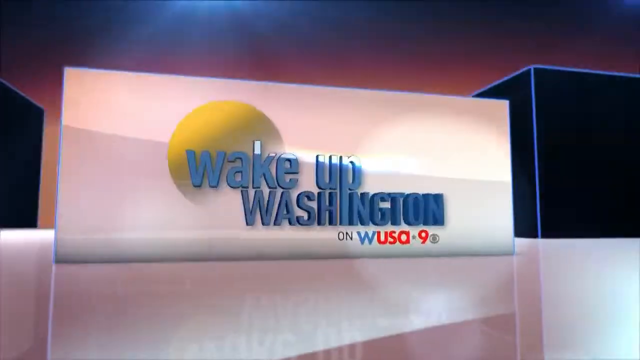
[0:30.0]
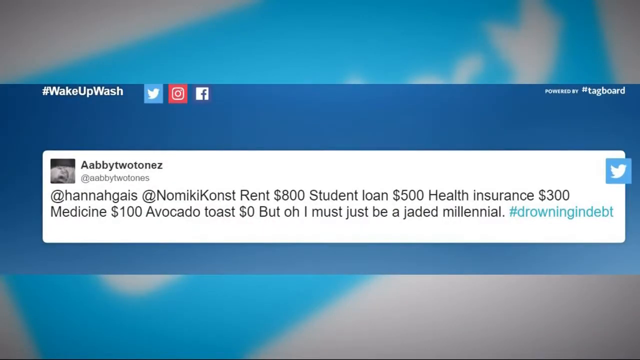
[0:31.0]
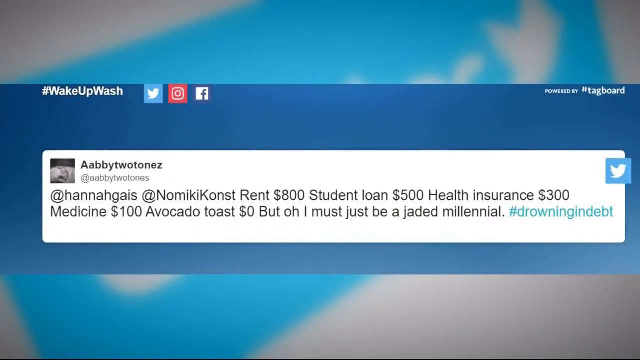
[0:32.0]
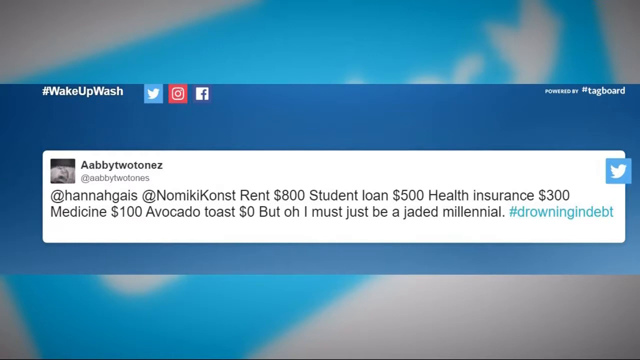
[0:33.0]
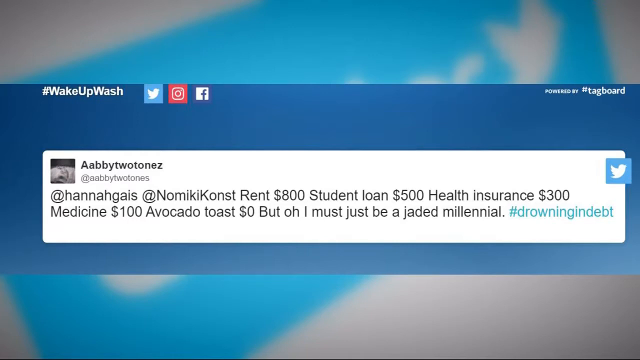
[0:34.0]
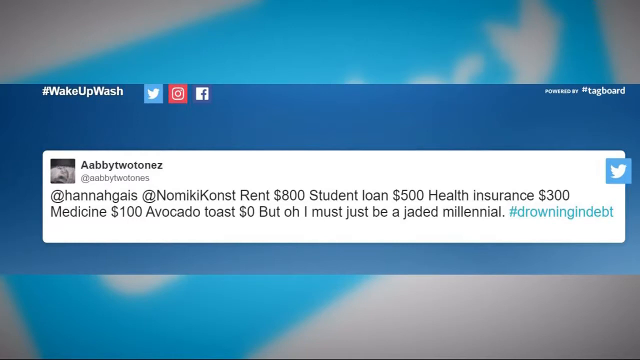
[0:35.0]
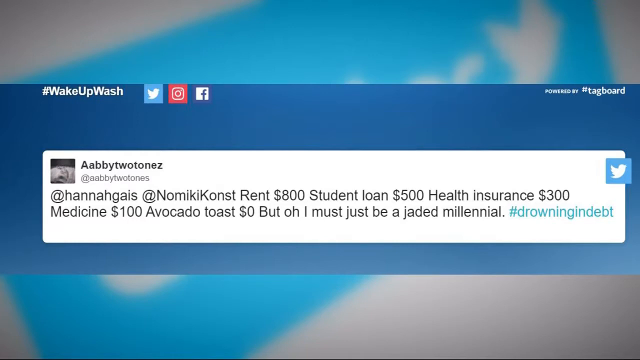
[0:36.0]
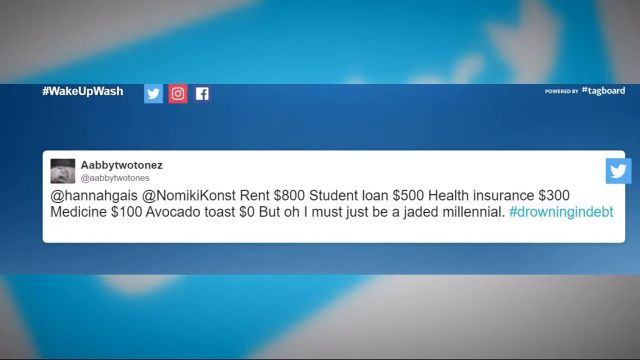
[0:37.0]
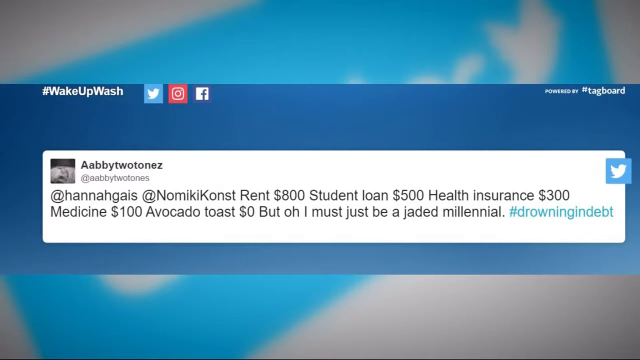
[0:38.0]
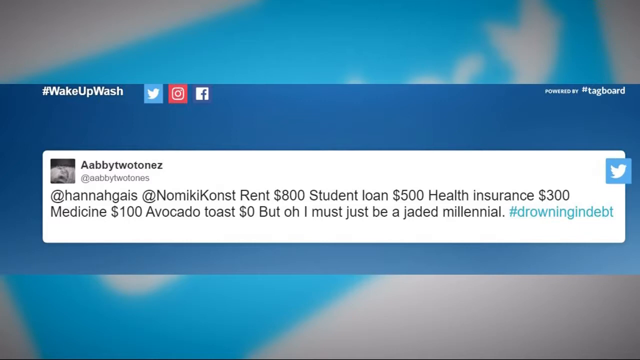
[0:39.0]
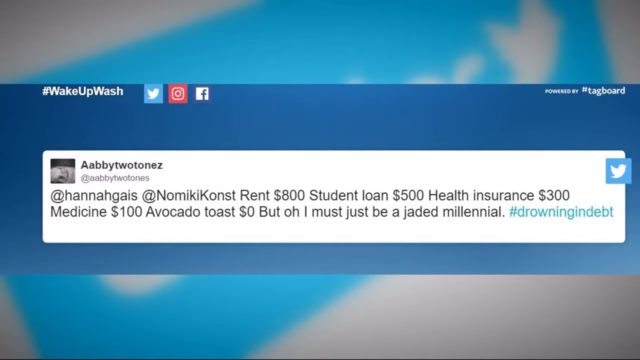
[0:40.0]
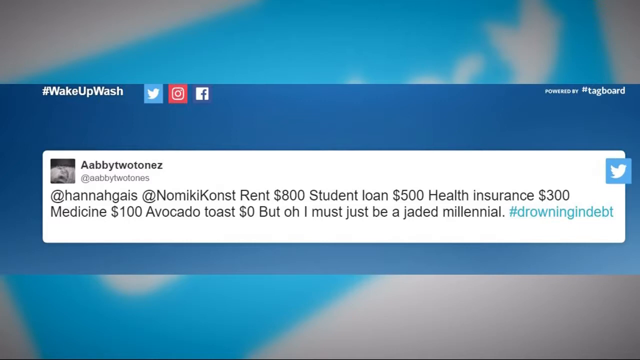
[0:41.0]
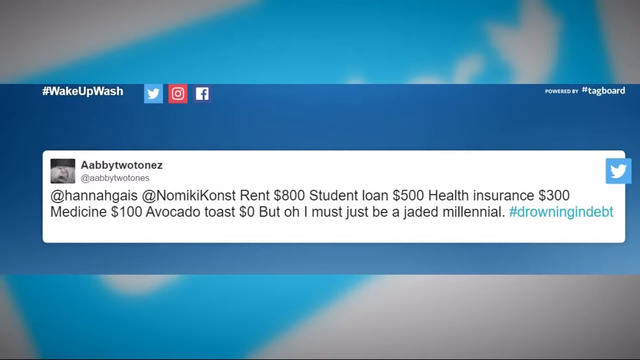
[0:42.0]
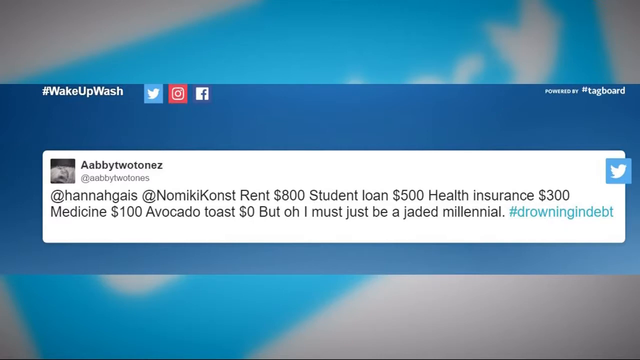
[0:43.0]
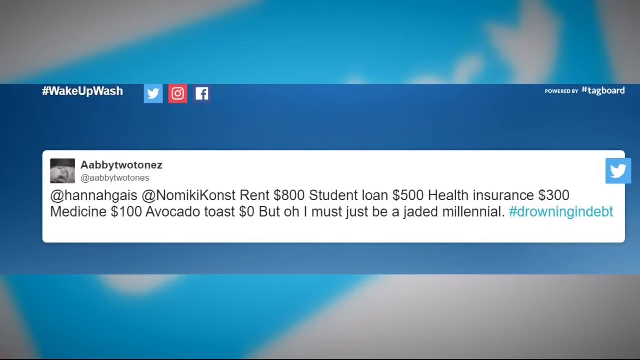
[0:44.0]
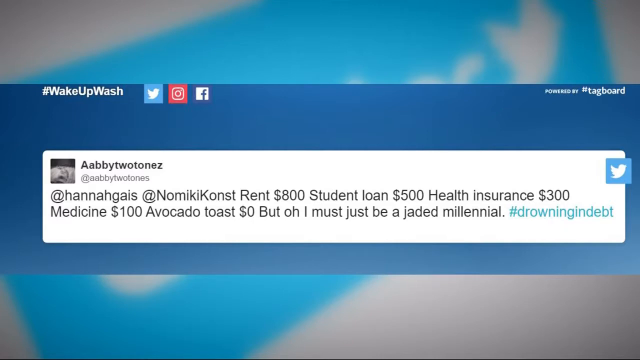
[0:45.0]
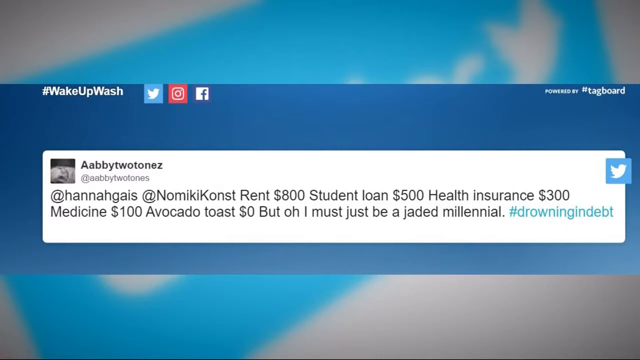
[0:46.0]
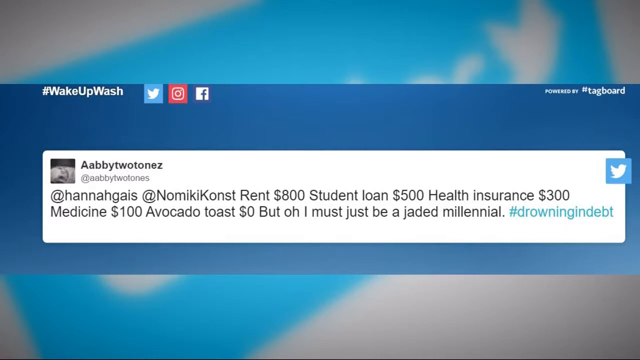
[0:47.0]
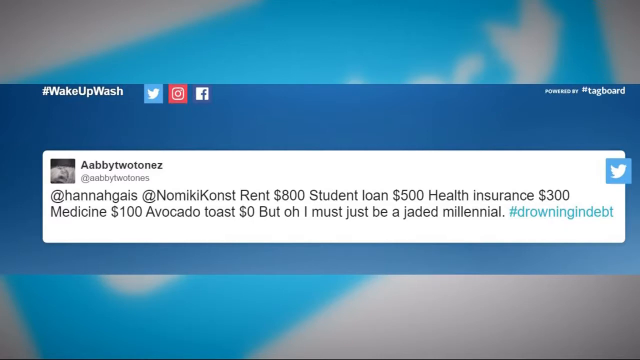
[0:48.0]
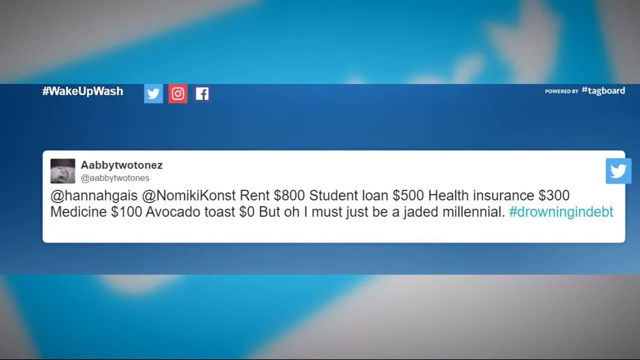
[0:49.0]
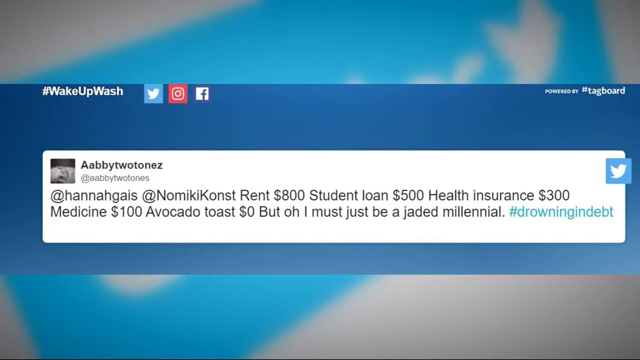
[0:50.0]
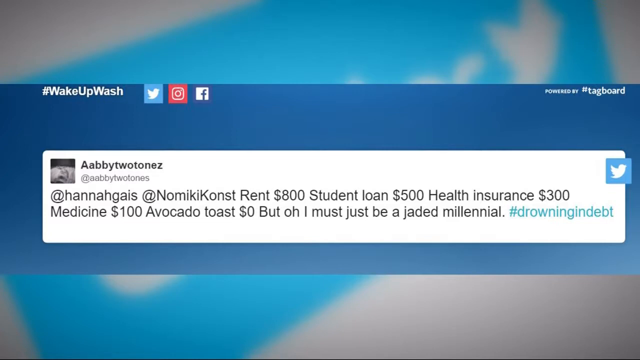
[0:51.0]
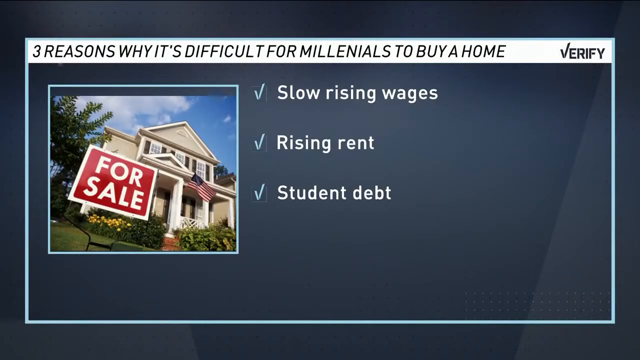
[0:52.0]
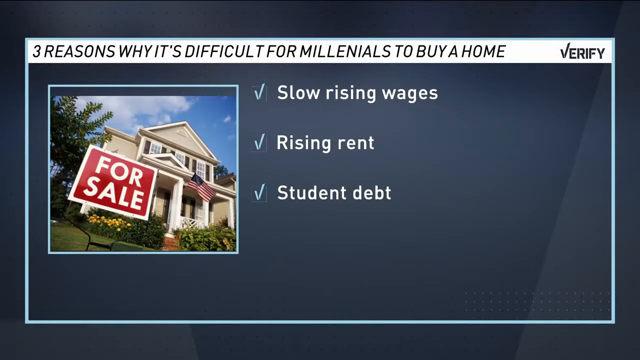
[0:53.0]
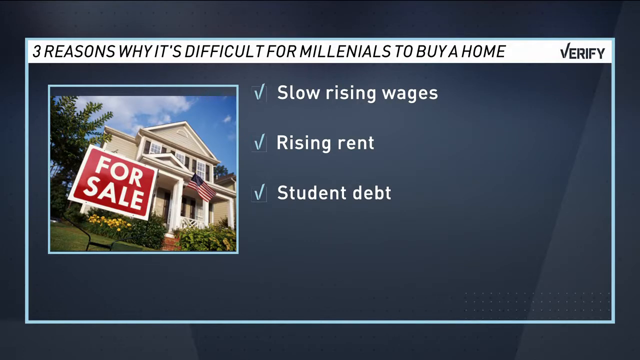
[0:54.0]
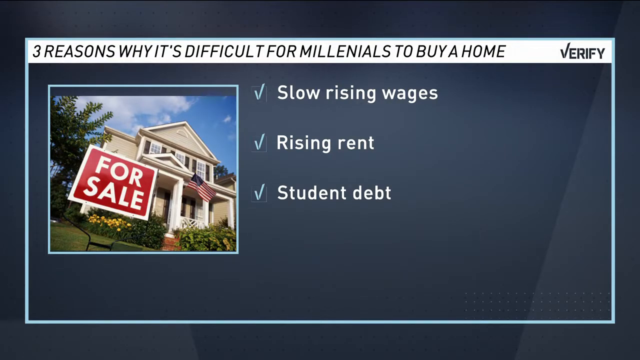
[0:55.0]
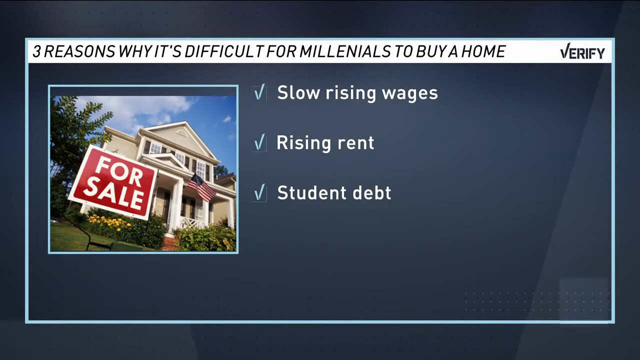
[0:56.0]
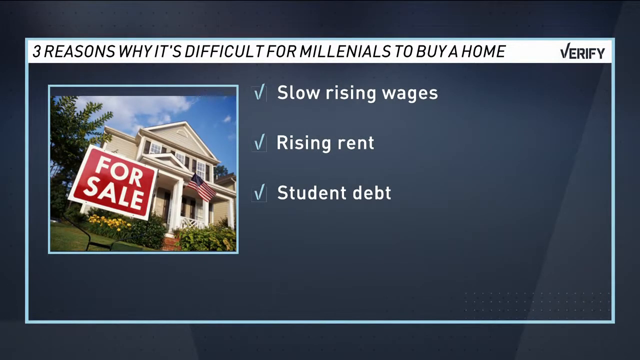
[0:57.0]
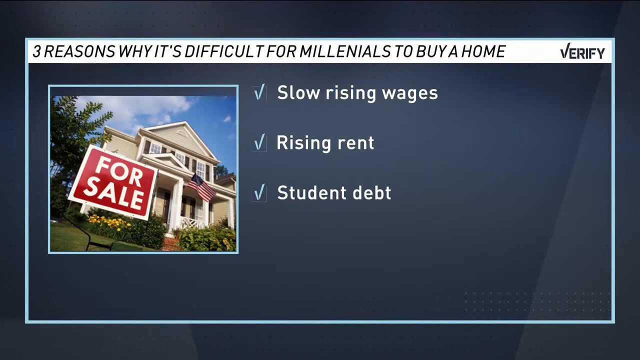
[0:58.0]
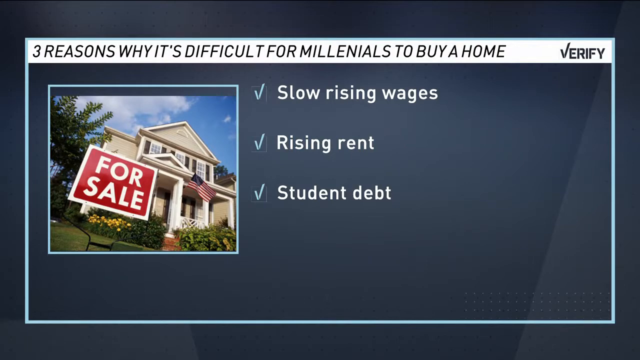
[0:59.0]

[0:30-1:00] Twitter posts are shown from the Wake Up Wash, apparently their social media, with the Twitter, Instagram and Facebook logos beside it and "powered by #Tagboard." A post from Abby Two Tones, shared on Twitter, addressed at Hannah Gayes and at Nomiki Kunst, reads "rent $800, student loan $500, health insurance $300," lists medicine at $110 or $100, and continues "avocado toast $0. But oh, I must just be a jaded millennial. #drowning in debt." The video then goes to another screen from Verify, with Verify in the top right-hand corner, reading "three reasons why it's difficult for millennials to buy a home." A check mark is beside each of the three reasons: "slow rising wages," "rising rent" and "student debt." To the left of them is a picture of a home with a blue sky, clouds in the background and trees beside it; the home has an American flag on the front and a red for sale sign.